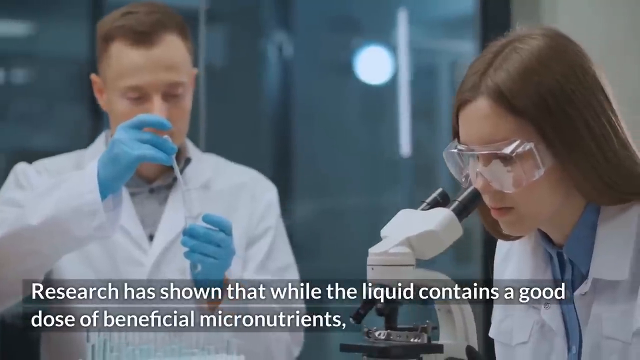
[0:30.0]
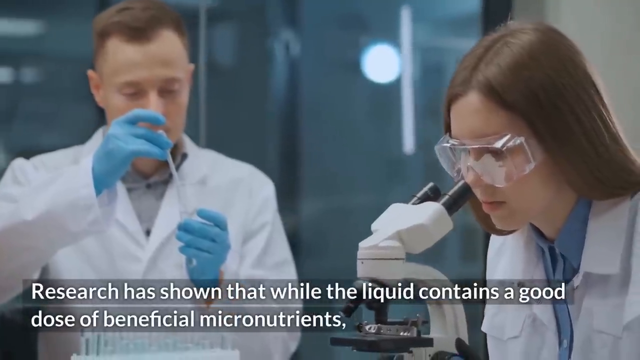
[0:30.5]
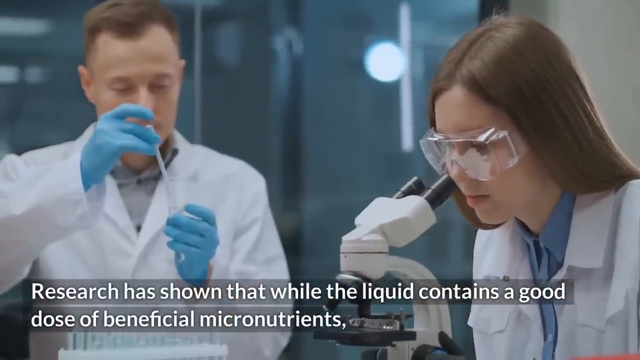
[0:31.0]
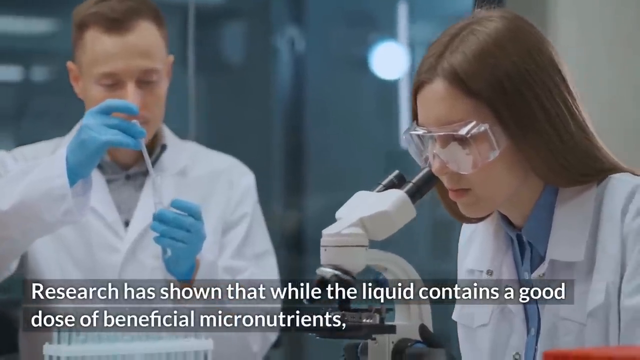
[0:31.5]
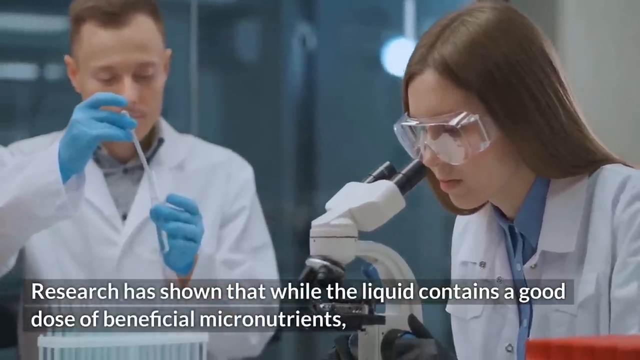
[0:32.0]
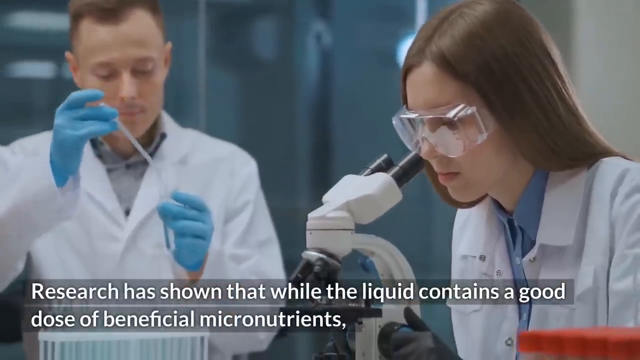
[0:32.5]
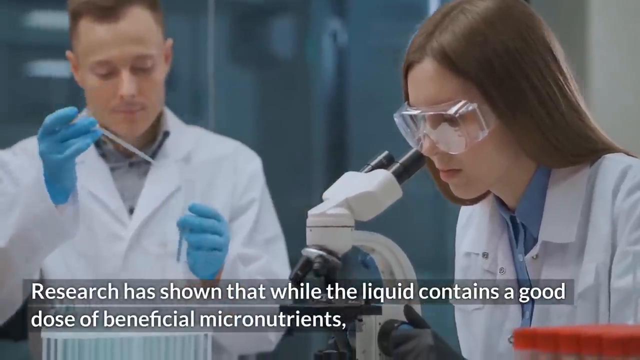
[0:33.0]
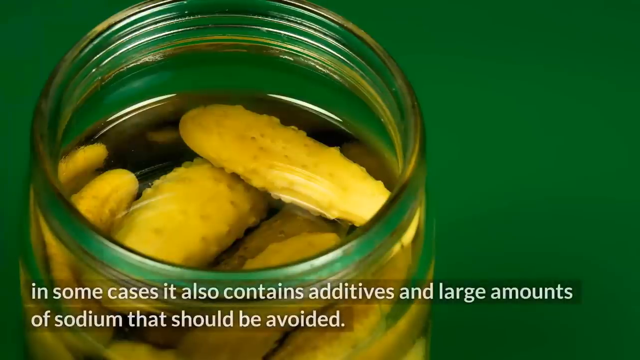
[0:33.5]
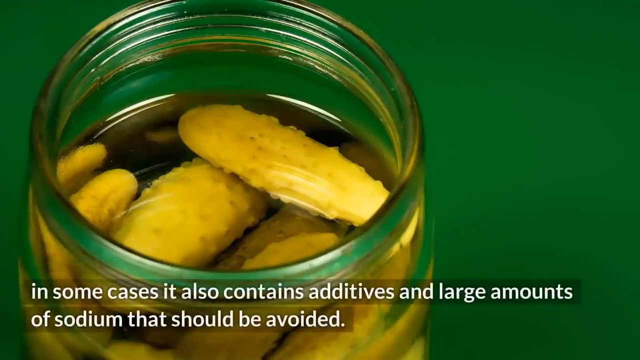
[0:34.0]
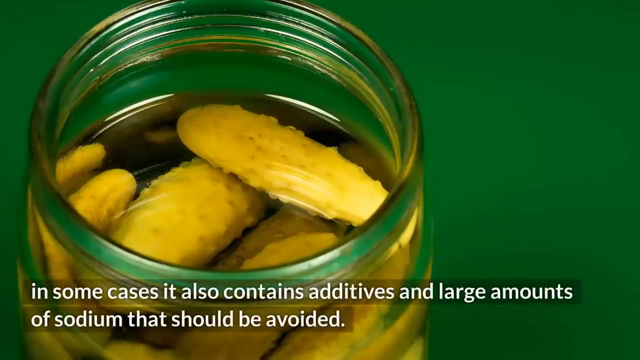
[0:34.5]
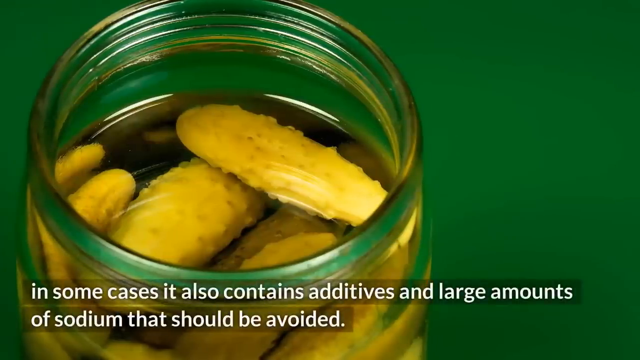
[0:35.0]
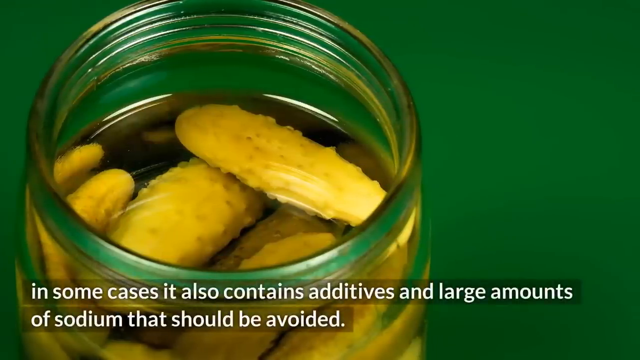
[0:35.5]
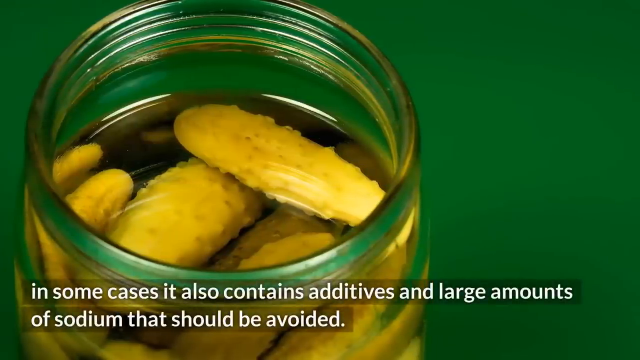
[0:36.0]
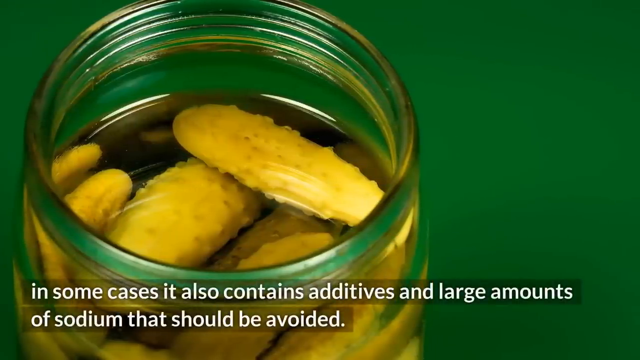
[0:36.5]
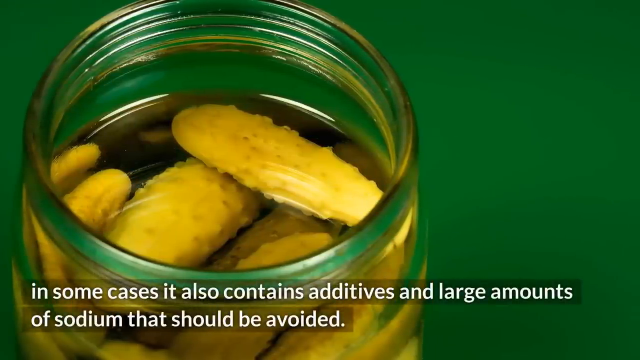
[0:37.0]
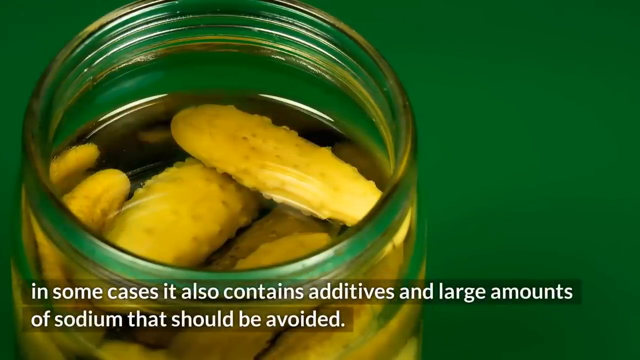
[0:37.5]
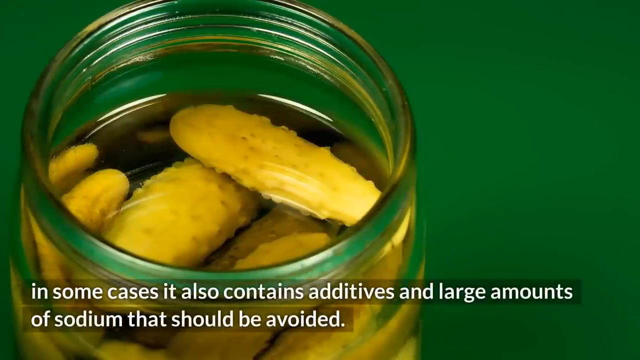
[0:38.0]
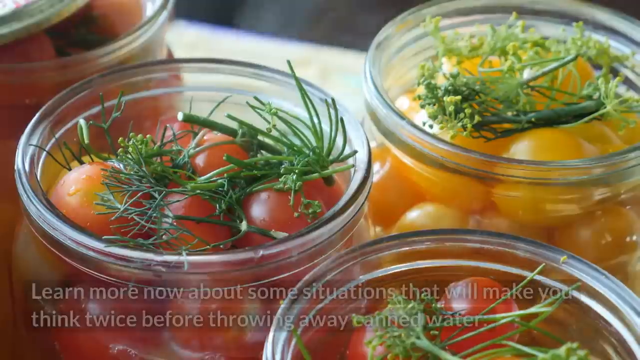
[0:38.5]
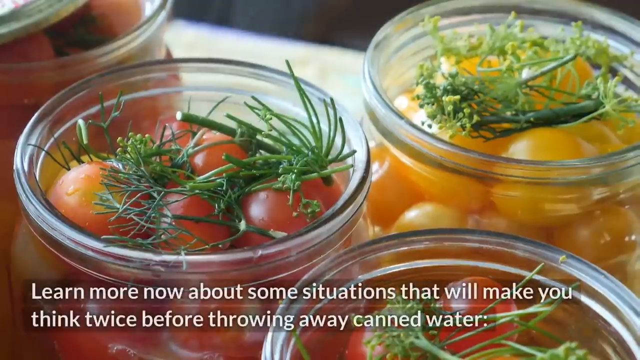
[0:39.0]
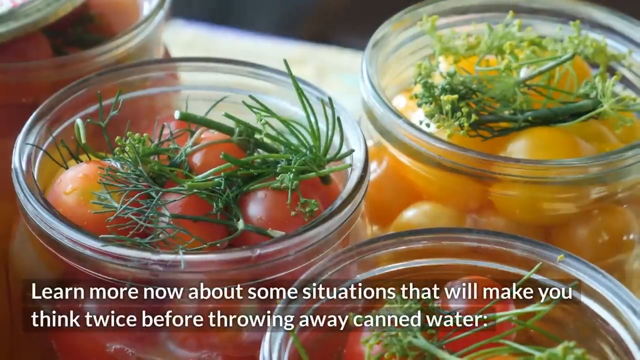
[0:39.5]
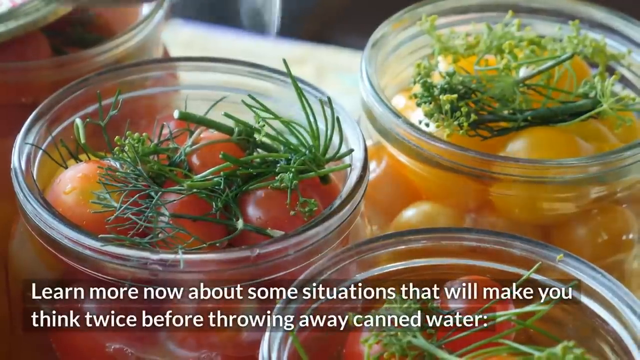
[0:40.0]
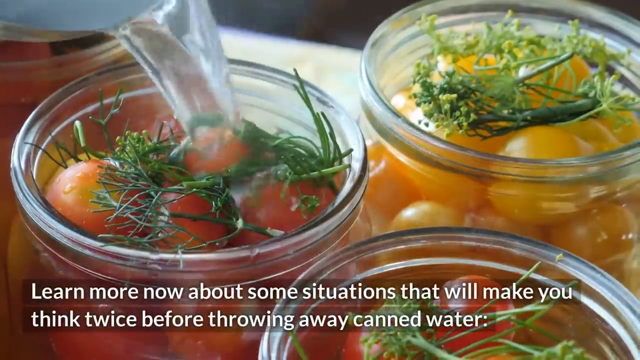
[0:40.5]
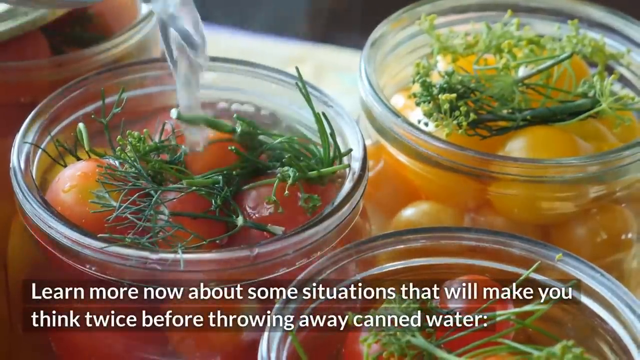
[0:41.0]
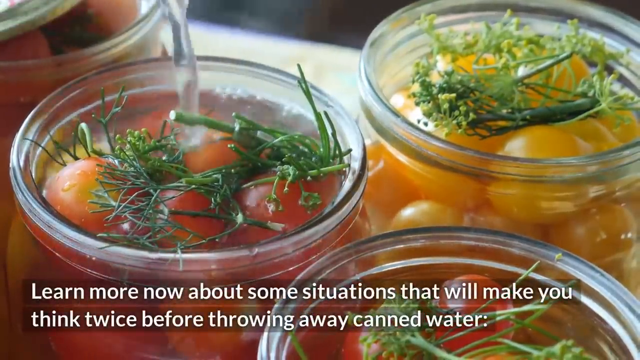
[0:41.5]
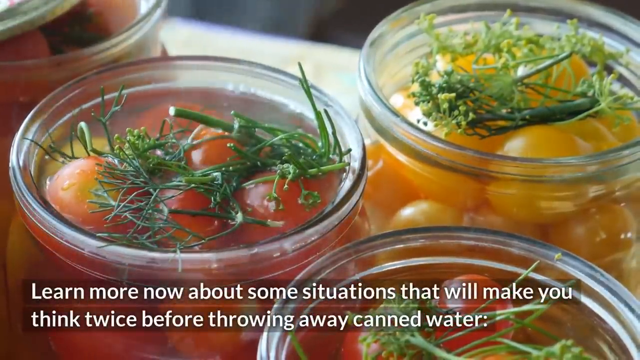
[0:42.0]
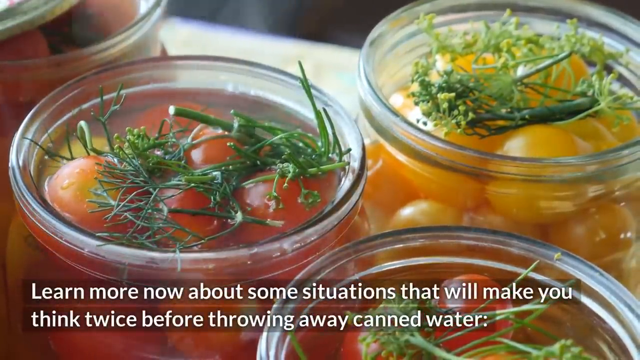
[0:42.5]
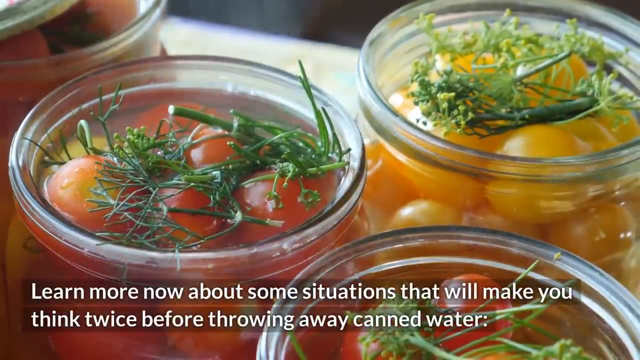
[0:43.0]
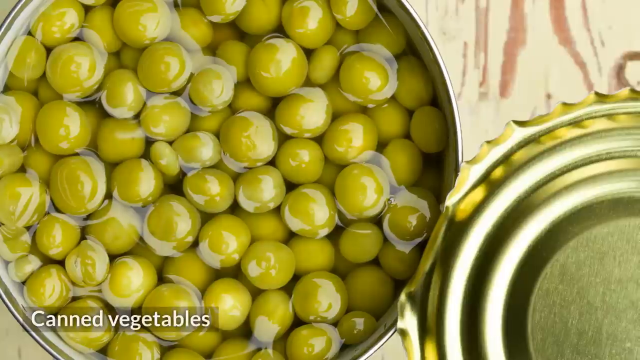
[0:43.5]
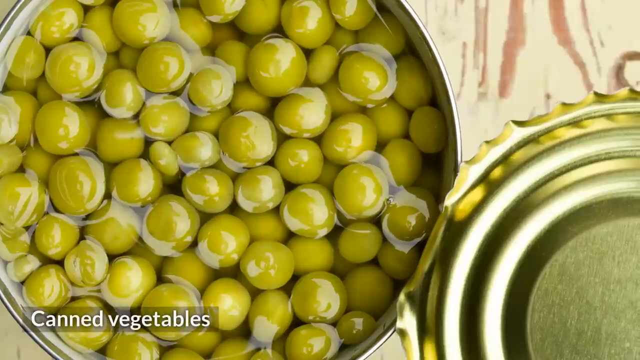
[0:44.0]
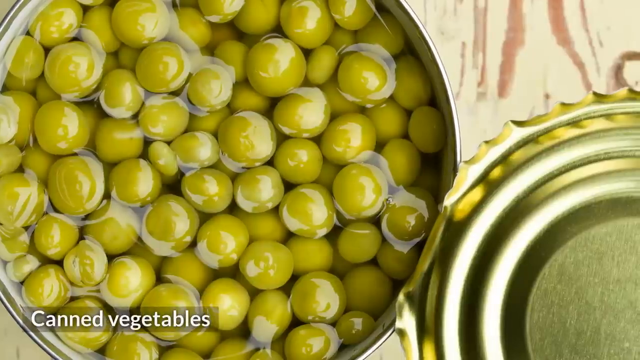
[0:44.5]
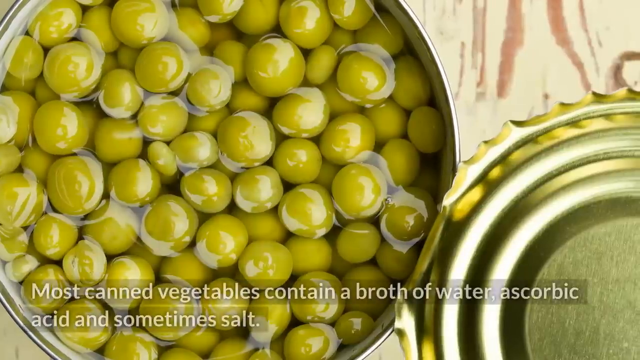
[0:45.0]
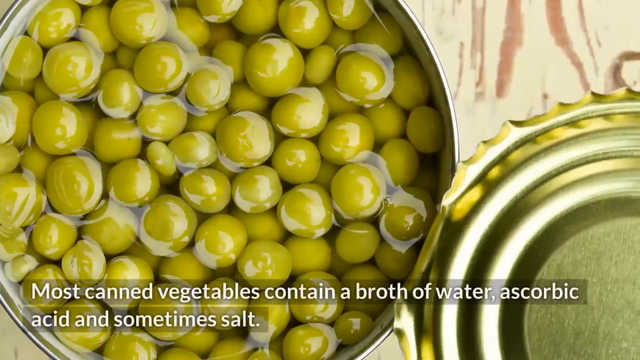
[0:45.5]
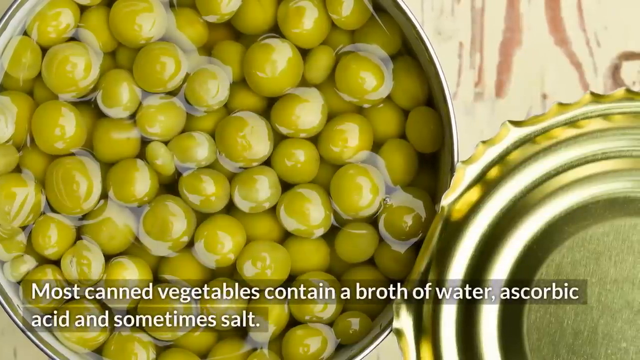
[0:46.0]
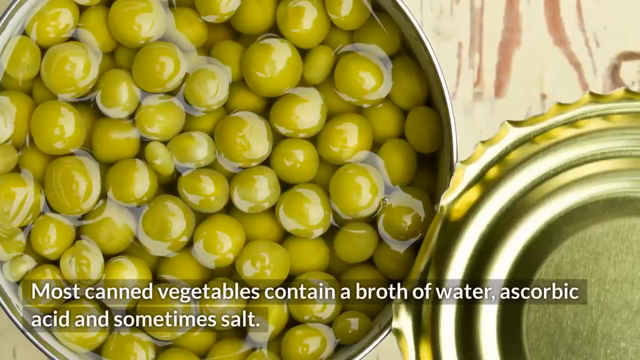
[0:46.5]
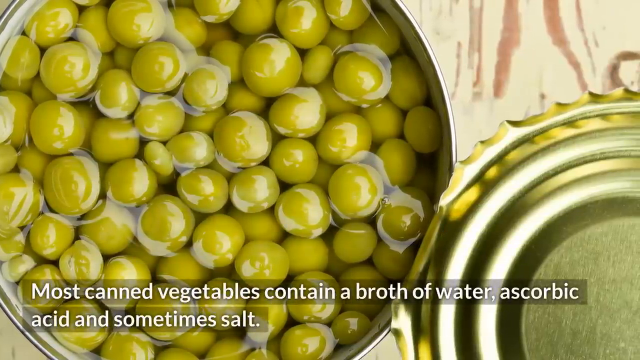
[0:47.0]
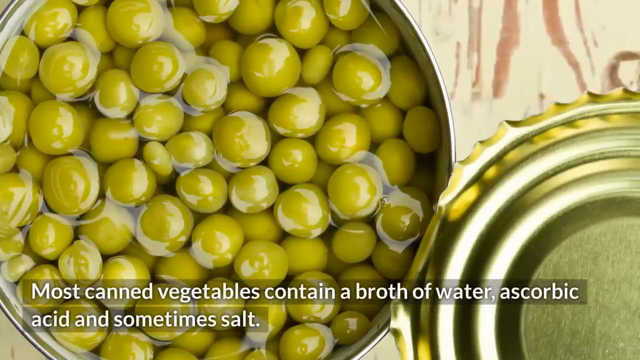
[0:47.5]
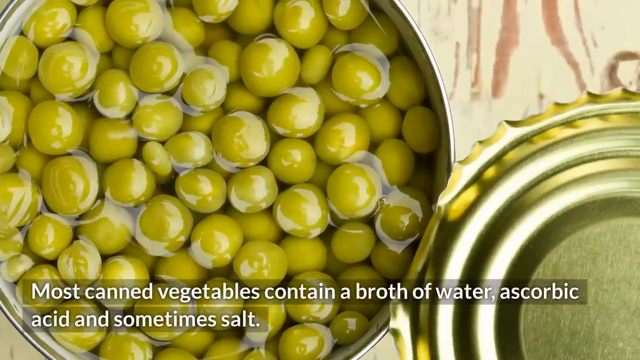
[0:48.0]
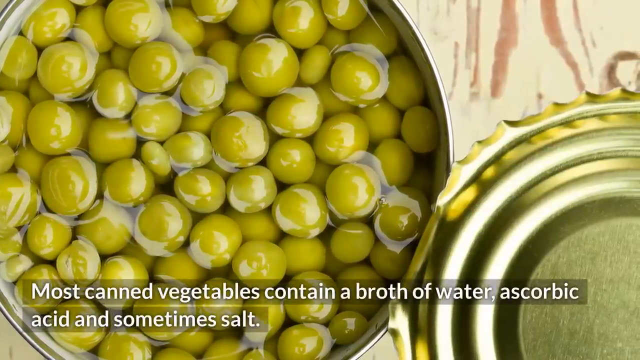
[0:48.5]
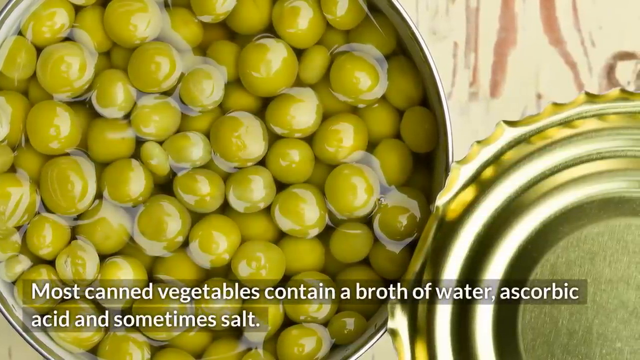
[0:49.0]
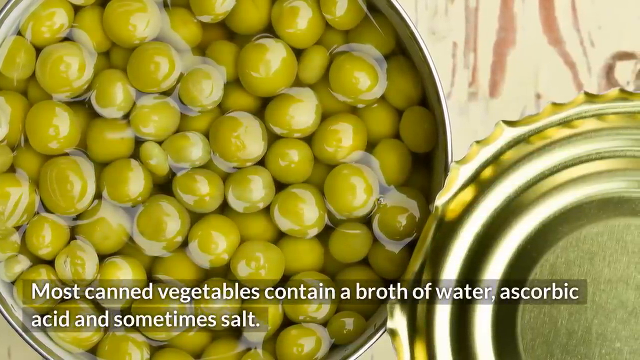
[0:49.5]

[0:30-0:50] A jar of pickles is shown against a green background, filmed from above, looking down into the jar. The words read "in some cases, it also contains additives and large amounts of sodium that should be avoided." A quick shot shows the tops of four different jars of canned food that look like tomatoes, followed by a shot of an open can of peas. In the shot of the tomatoes, somebody appears to be pouring boiling water over the top. Text over the peas begins "most canned vegetables." Other text reads "Learn more now about some situations that will make you think twice before throwing away canned water" and "Most canned vegetables contain a broth of water, ascorbic acid, and sometimes salt." The video then goes to another screen that flips quickly.